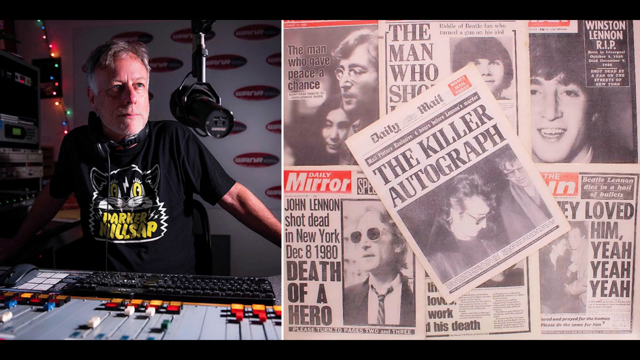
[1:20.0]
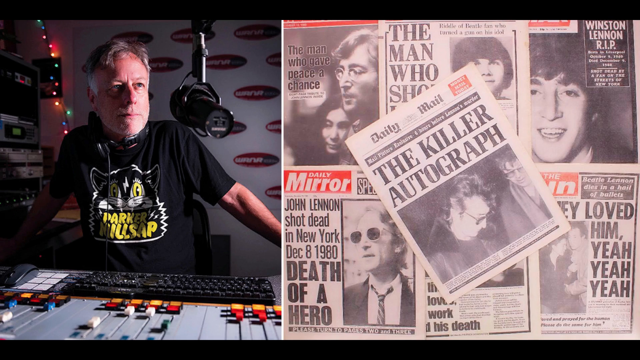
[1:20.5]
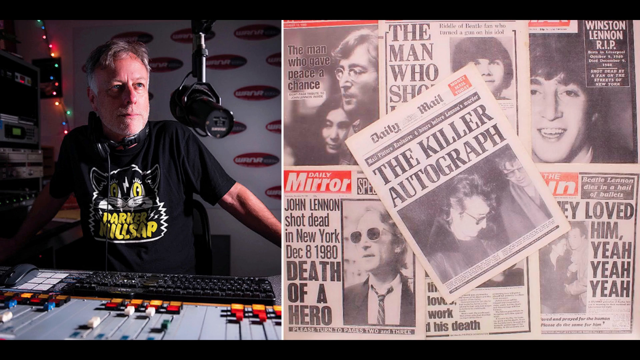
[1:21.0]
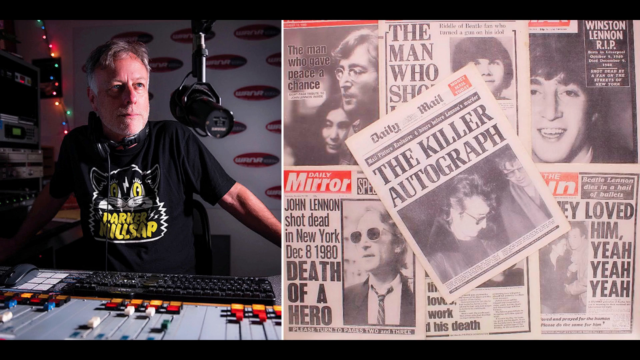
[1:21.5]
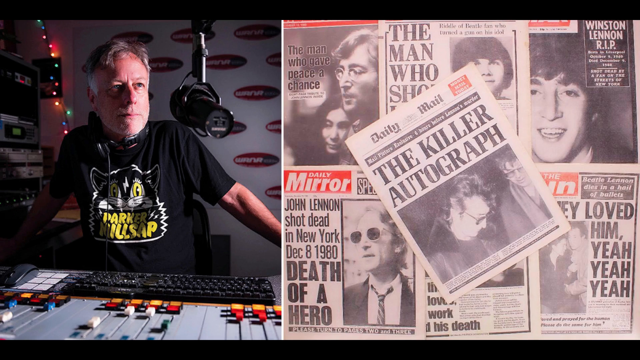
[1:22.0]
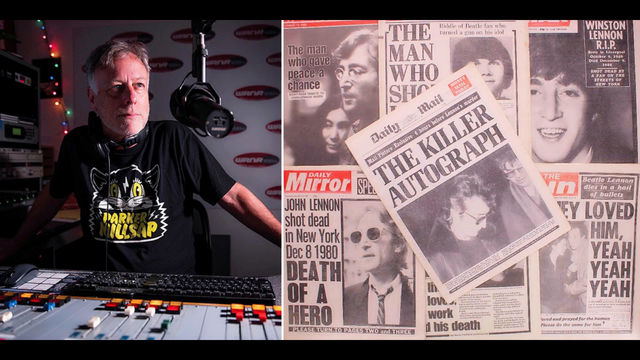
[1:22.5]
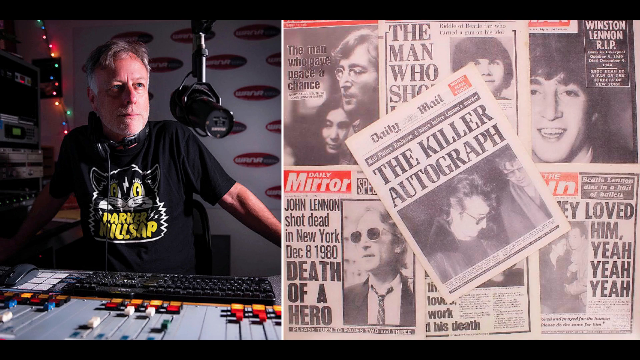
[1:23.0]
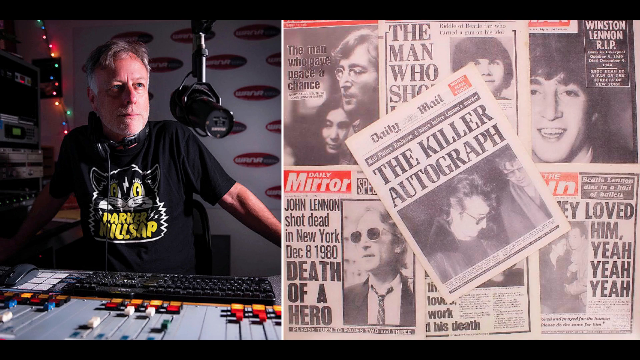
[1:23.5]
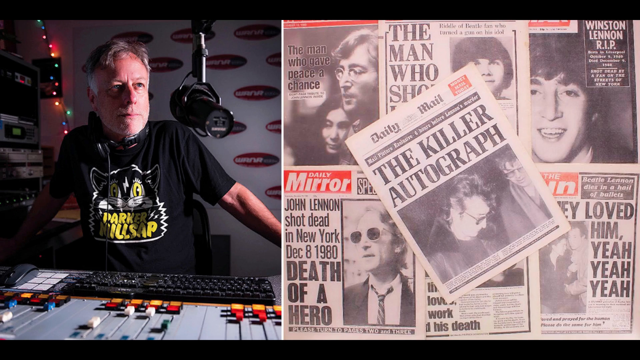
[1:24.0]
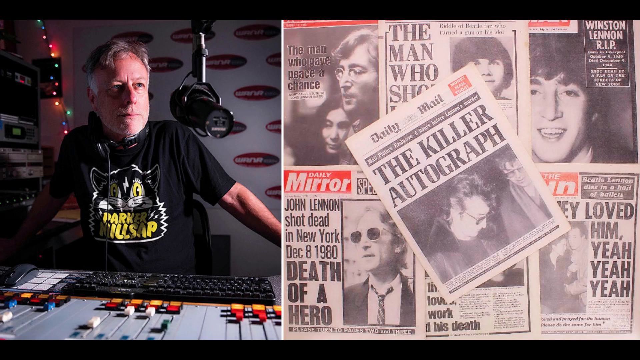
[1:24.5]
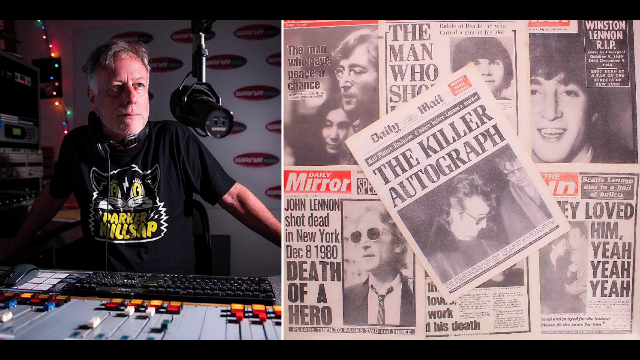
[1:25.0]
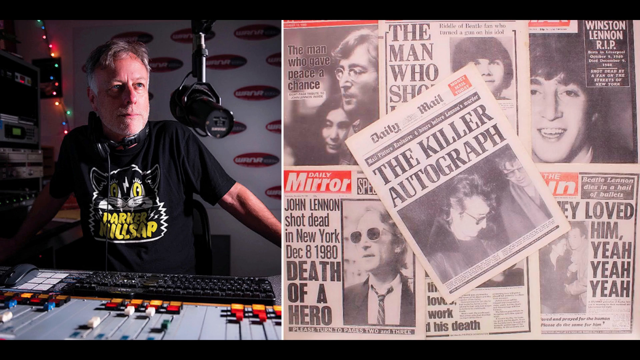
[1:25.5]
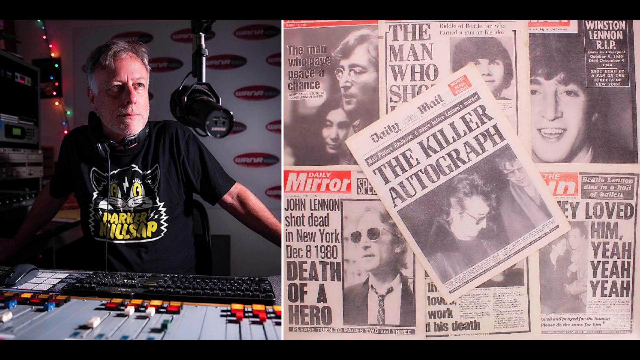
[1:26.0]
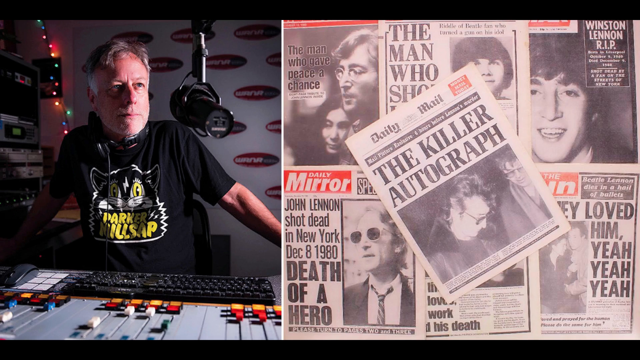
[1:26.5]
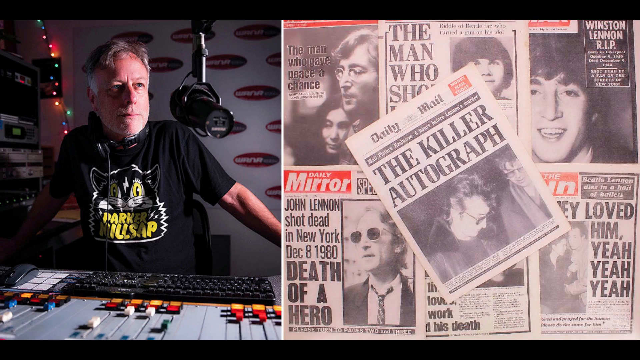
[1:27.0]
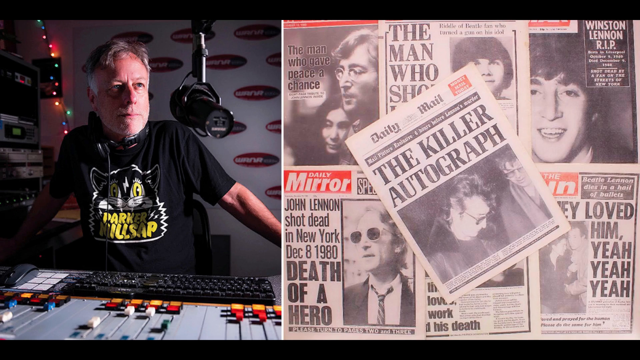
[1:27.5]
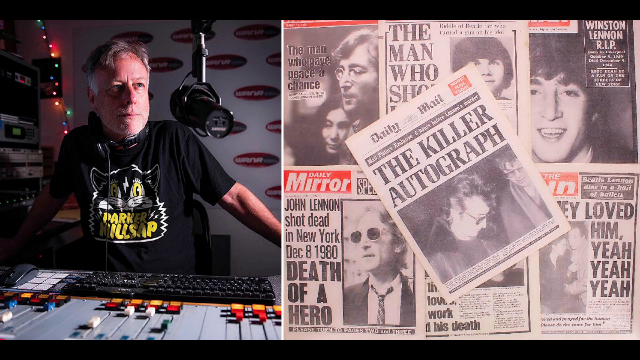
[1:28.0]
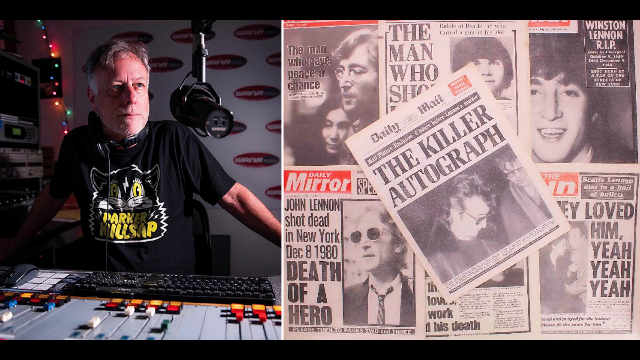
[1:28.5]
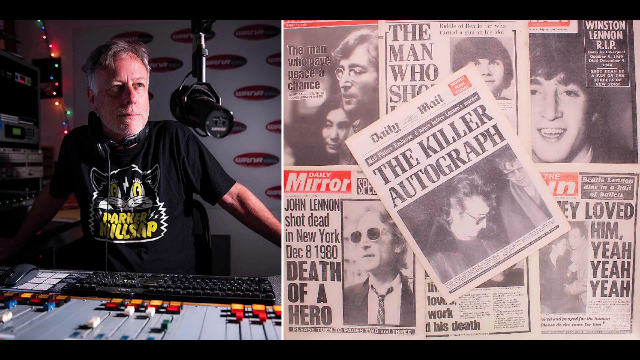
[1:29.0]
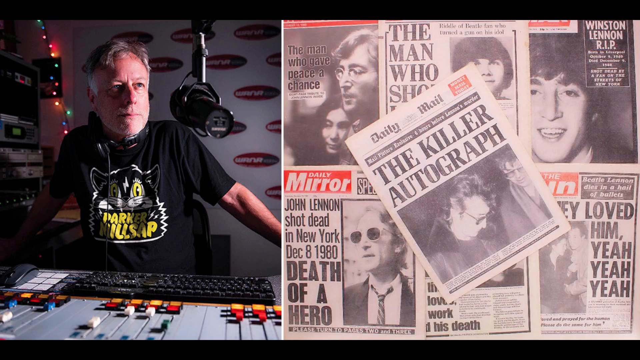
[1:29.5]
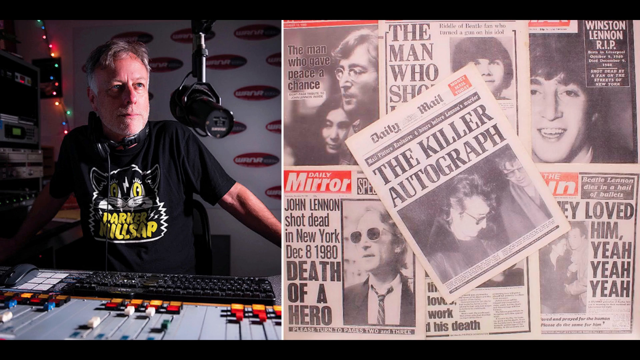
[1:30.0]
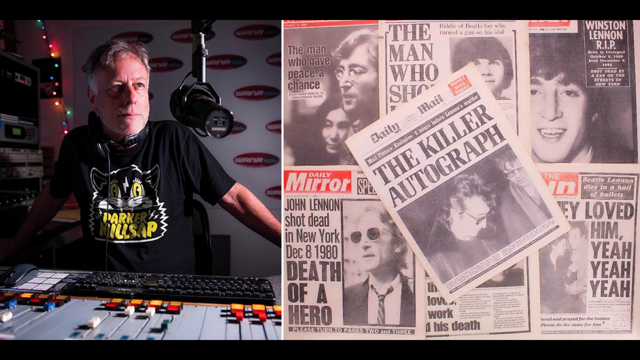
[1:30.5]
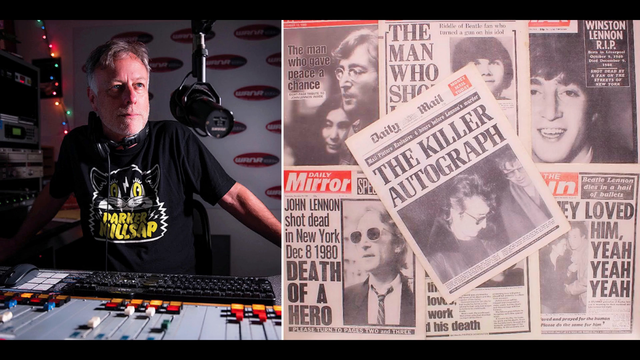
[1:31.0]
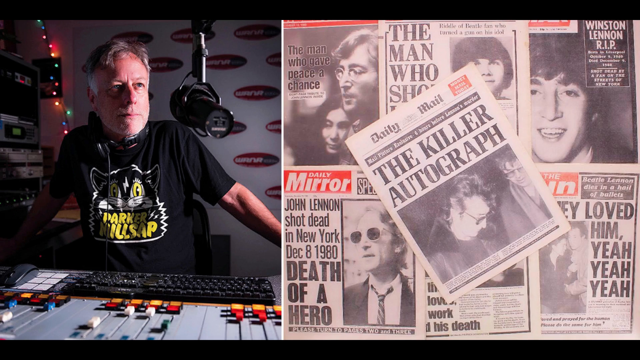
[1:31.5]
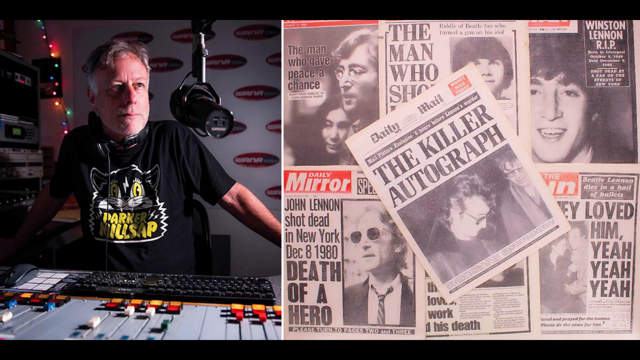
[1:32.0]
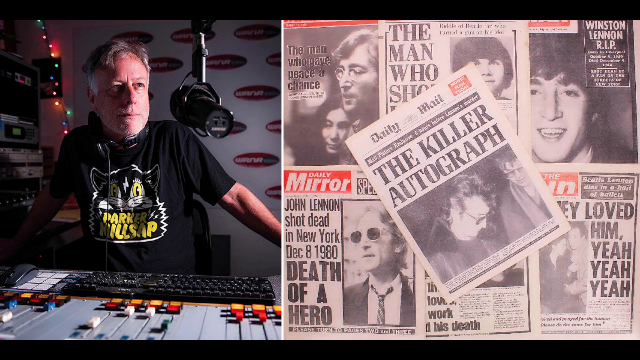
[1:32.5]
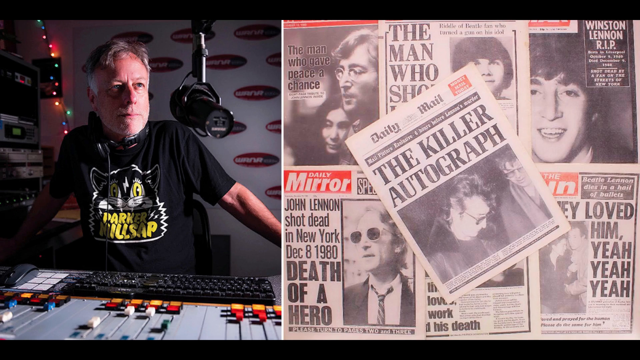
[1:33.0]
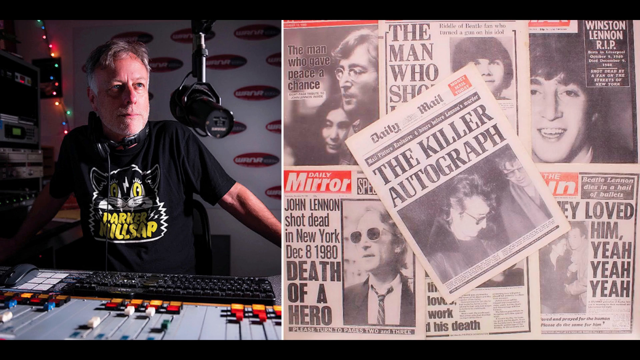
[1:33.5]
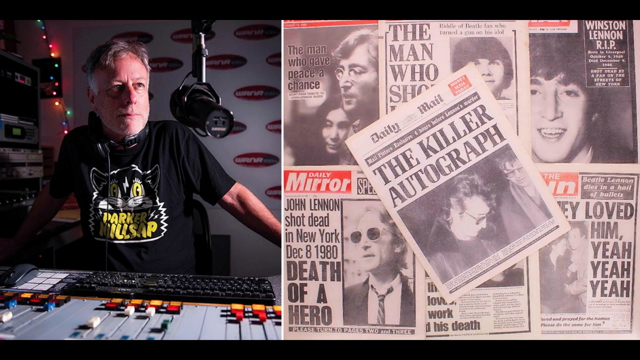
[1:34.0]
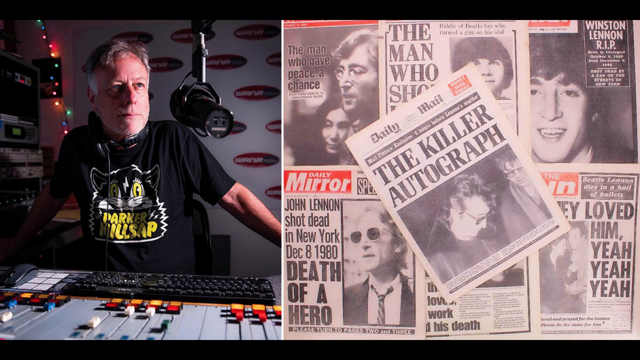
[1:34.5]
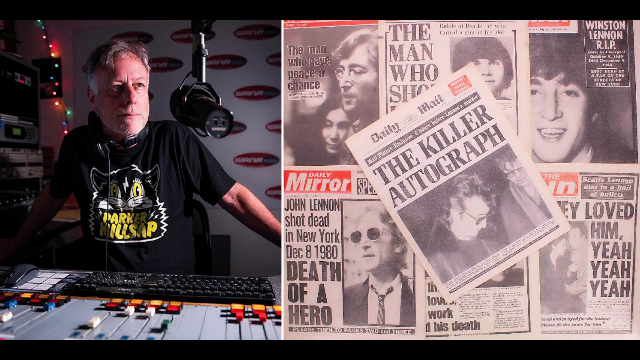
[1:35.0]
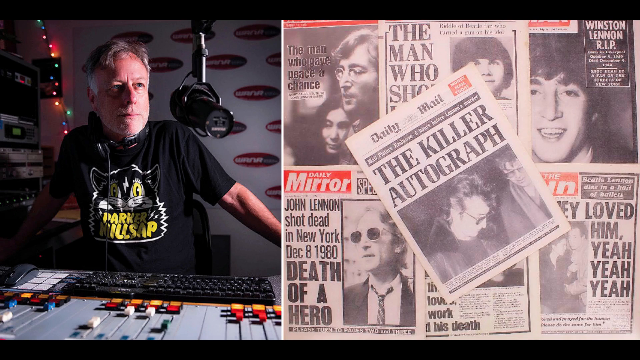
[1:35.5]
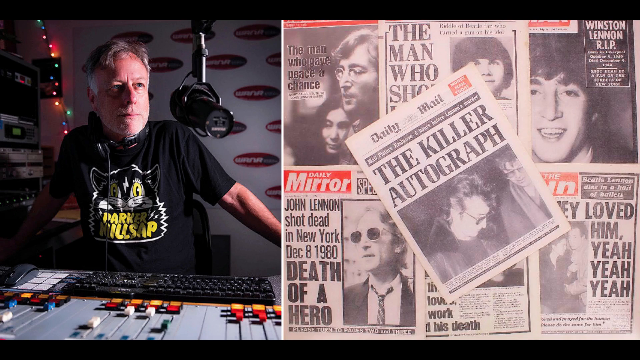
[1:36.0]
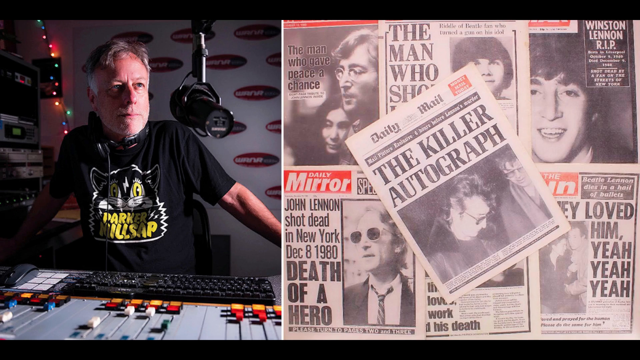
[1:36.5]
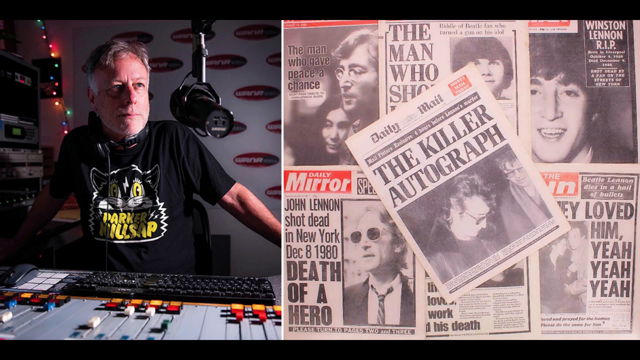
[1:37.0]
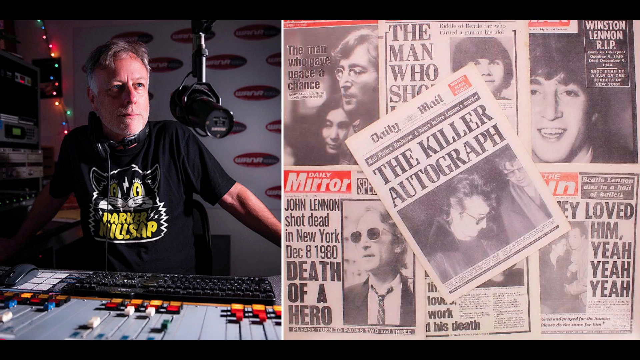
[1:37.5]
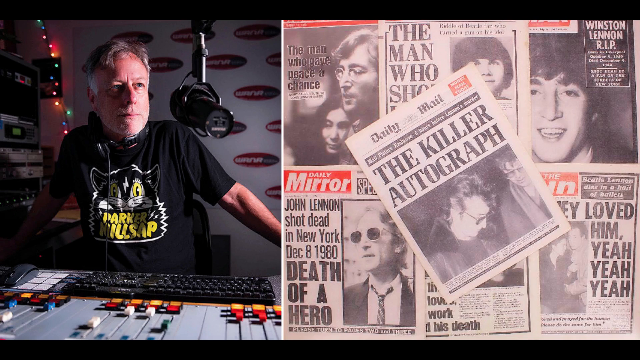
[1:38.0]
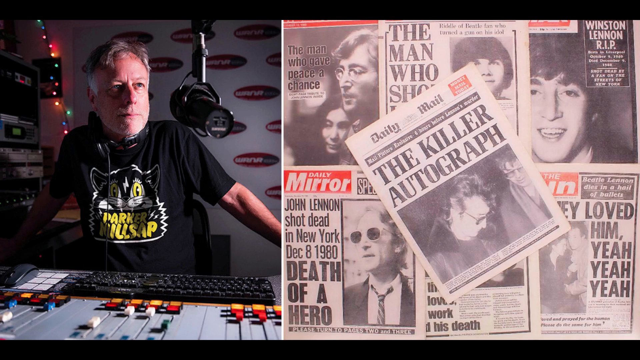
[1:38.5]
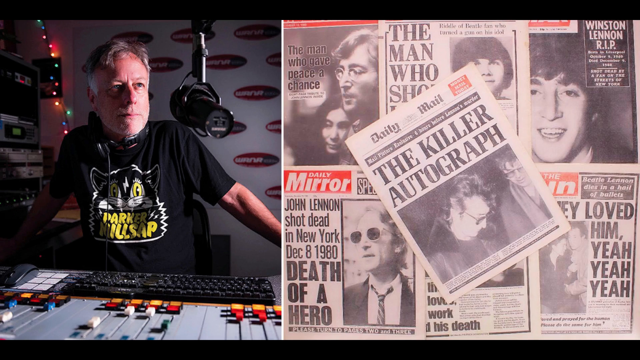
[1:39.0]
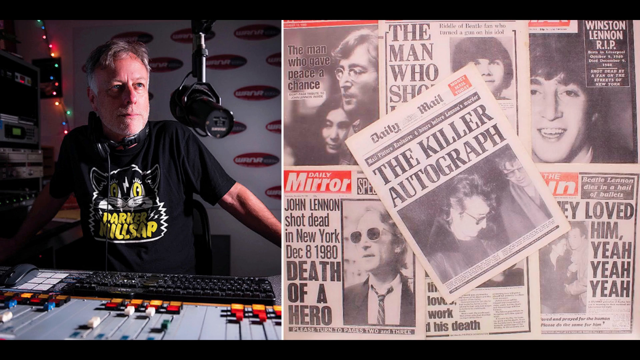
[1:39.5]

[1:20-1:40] The same split-screen image continues, with the radio DJ on the left and the newspaper clippings on the right, arranged in a two-by-three grid with a seventh newspaper resting on top. The DJ's right arm is kind of extended at a 45-degree angle away from his body, resting on a desk that runs perpendicular to the control panel desk in front of him. On that side desk is a stack of audio-visual equipment. At the bottom is what looks to be rectangular dark-colored units: a black casing on top with circular metal nubs running across it horizontally, and some kind of silver chassis below it. Above that is an empty space where maybe a unit might go. Above that space are two identical silver rectangular boxes that look to be maybe VHS or cassette recorder equipment, and above those is a slightly smaller silver or bluish-gray metallic box with a black monitor console in the center. In the middle of that console is what looks to be a screen with a green glowing light.